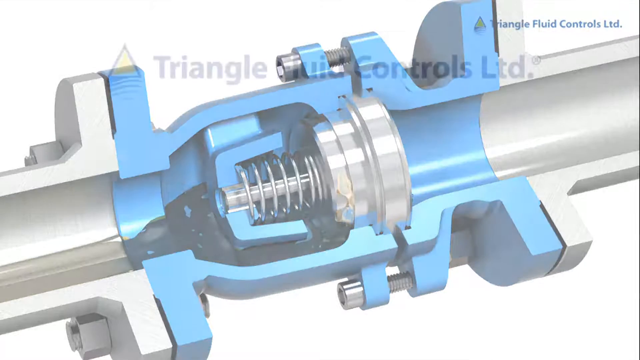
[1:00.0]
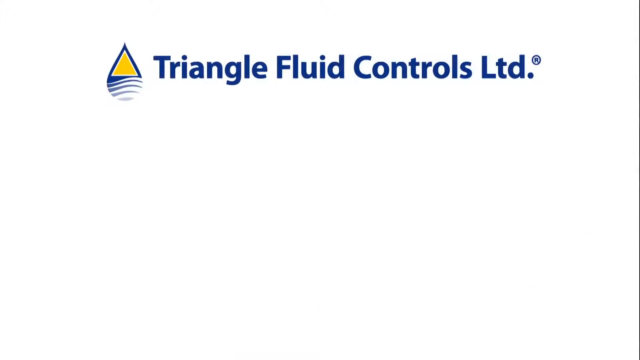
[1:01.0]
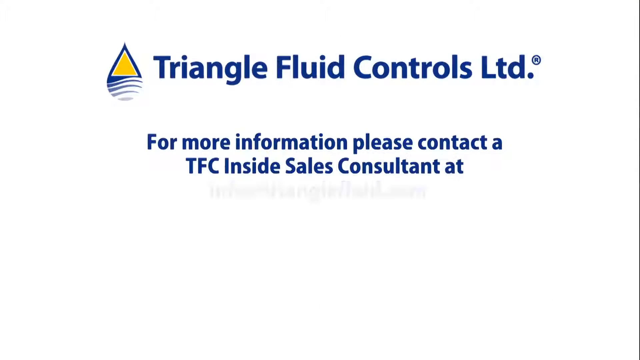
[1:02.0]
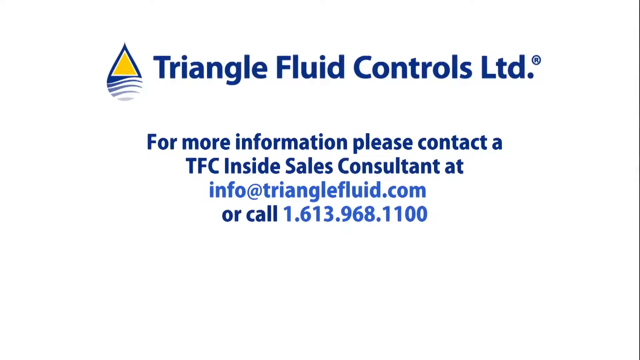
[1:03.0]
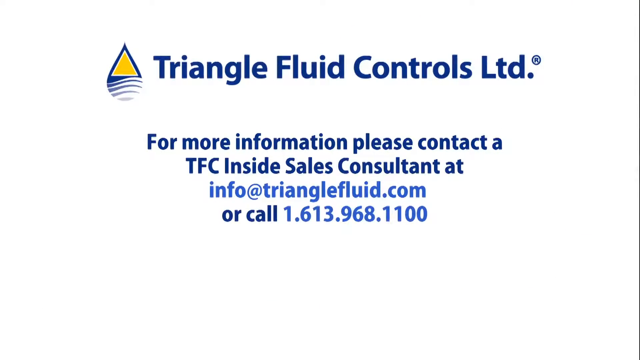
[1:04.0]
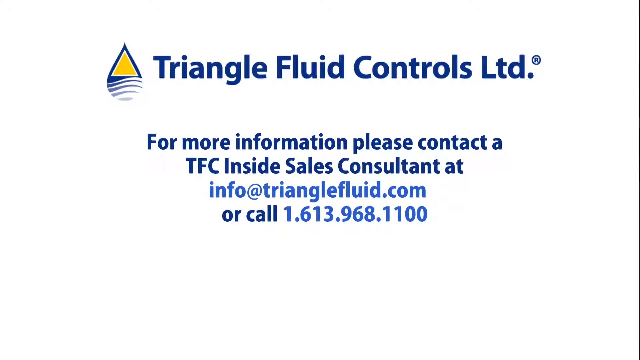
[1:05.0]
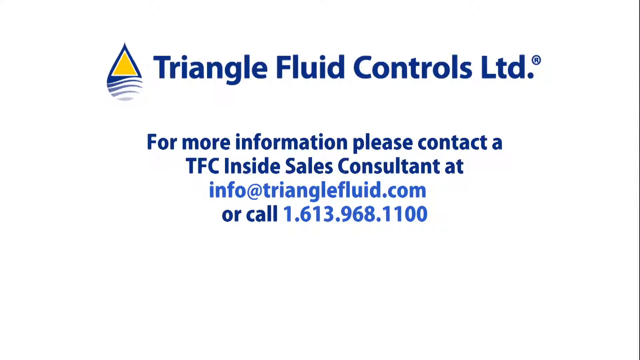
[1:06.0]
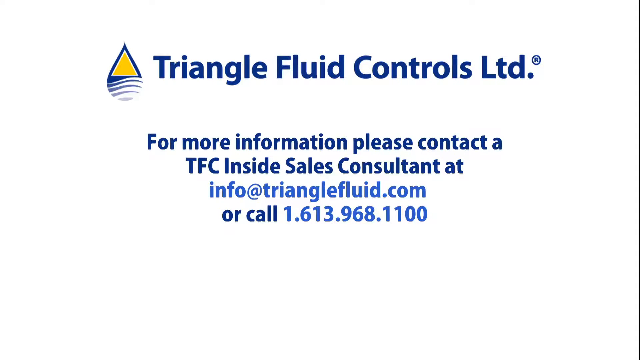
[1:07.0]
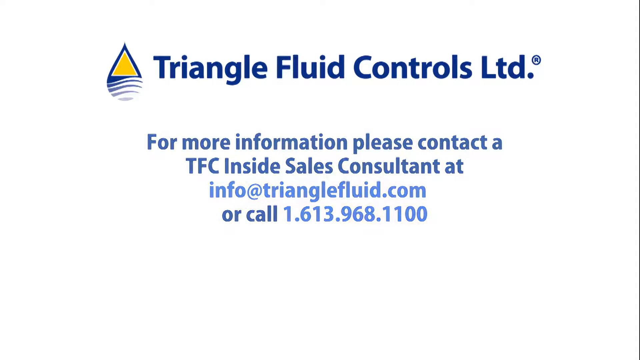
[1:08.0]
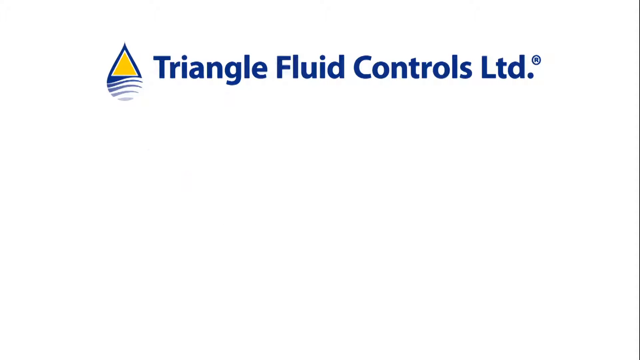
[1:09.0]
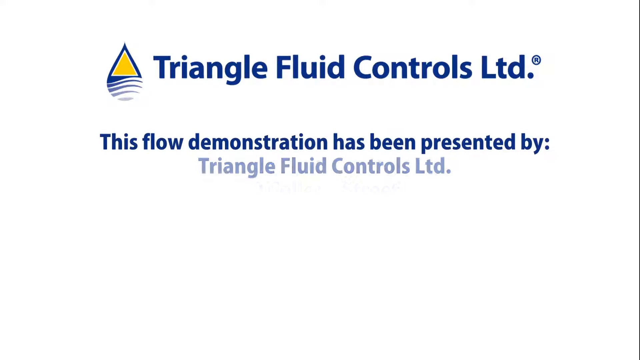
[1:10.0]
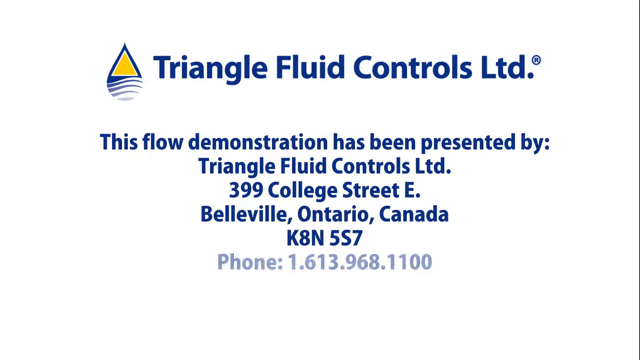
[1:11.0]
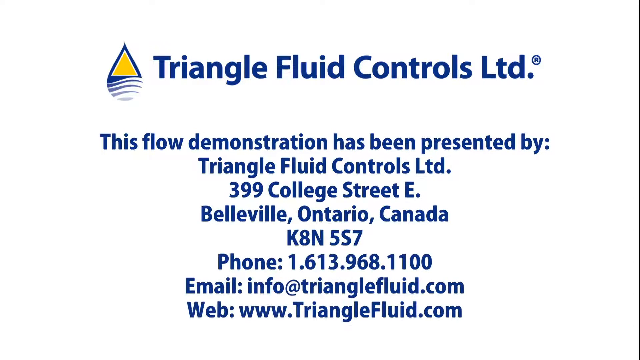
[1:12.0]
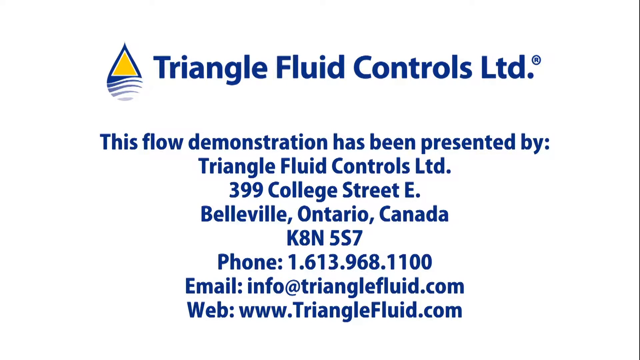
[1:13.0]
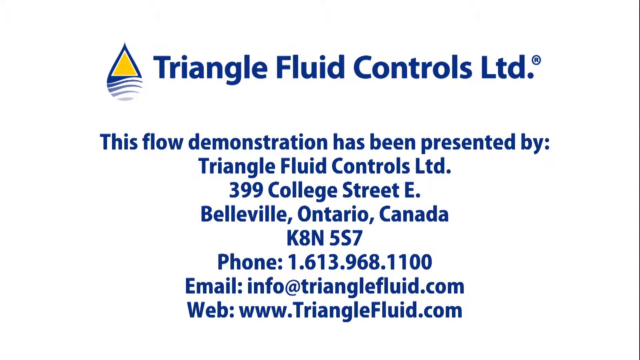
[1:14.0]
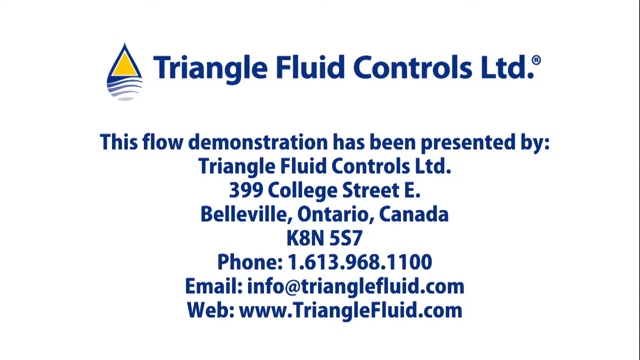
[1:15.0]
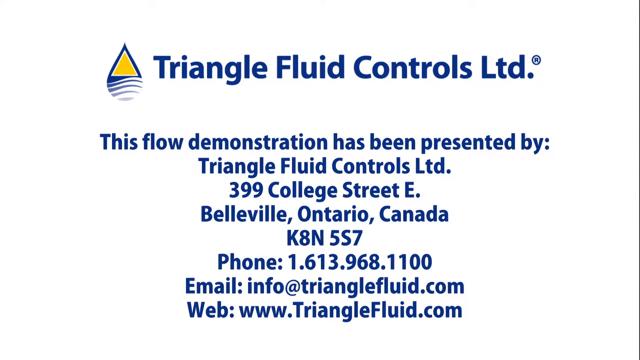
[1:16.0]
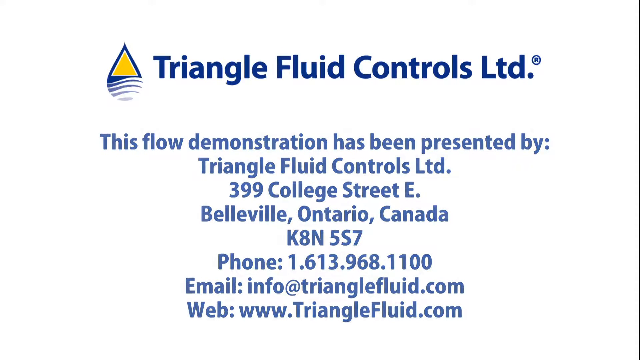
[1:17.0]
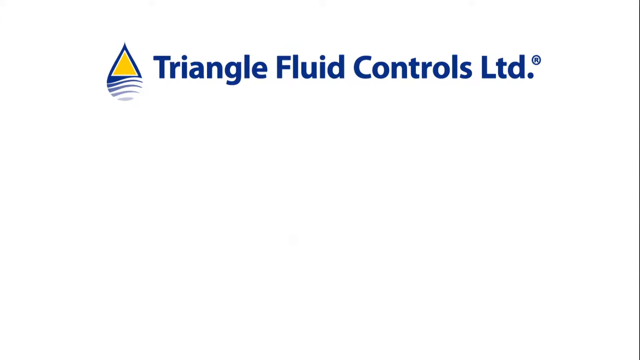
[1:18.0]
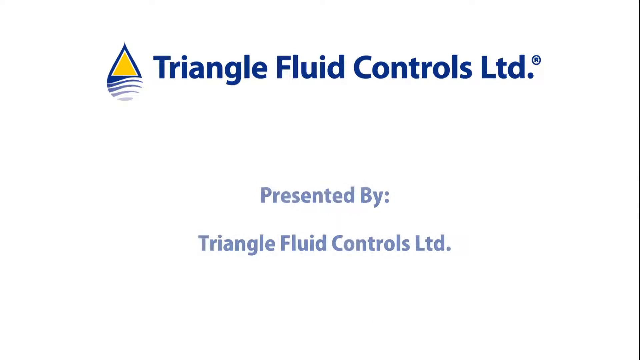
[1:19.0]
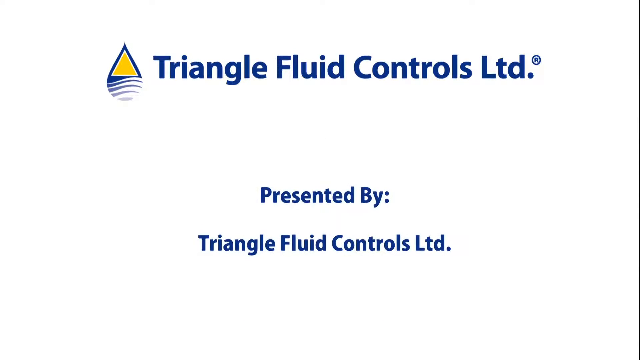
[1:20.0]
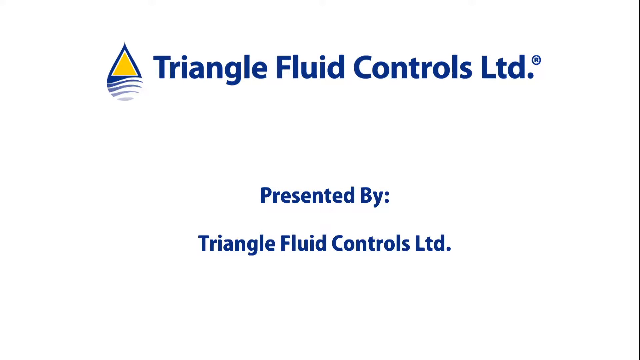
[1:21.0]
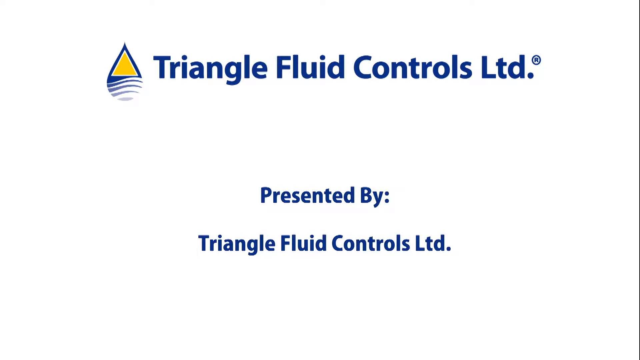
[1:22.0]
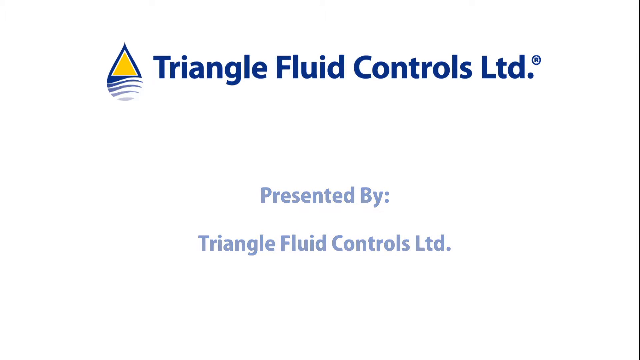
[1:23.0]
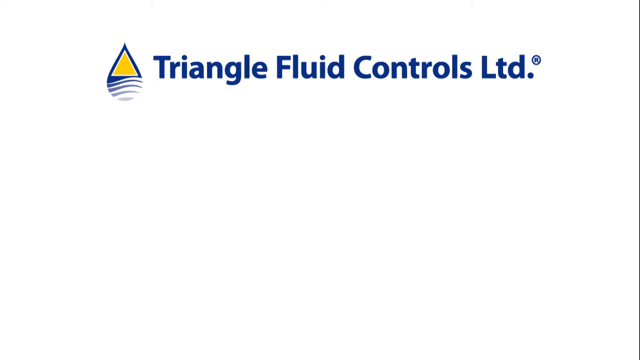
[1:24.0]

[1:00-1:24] Contact details appear, with text beginning "For more information, please contact", an email address at triangelfluid.com, and the phone number 1.613.968.1100, along with the labels "Phone, email, web", a website address, and a note that it is presented by TriangleFlute.com. There is also a logo of a striped fluid drop in blue and yellow. The valve is blue and joined to a grey pipe, with bolts connecting the valve and the pipe. The fluid and the spring are shown, with the spring compressing so the fluid can pass through the check valve. The spring is silver. The fluid is transparent, not the color of water, but see-through.